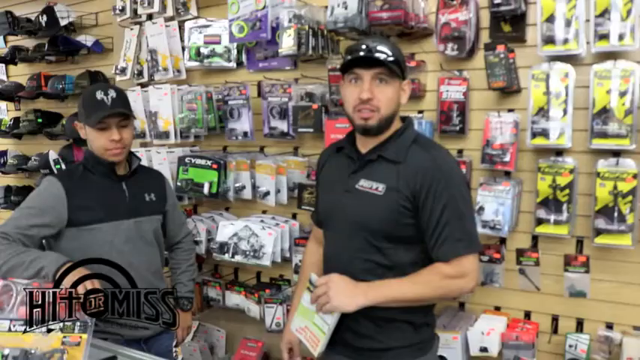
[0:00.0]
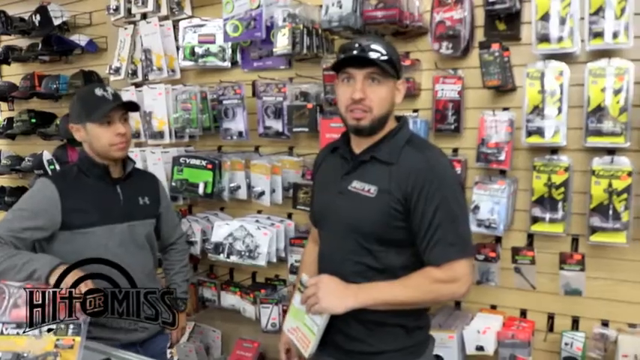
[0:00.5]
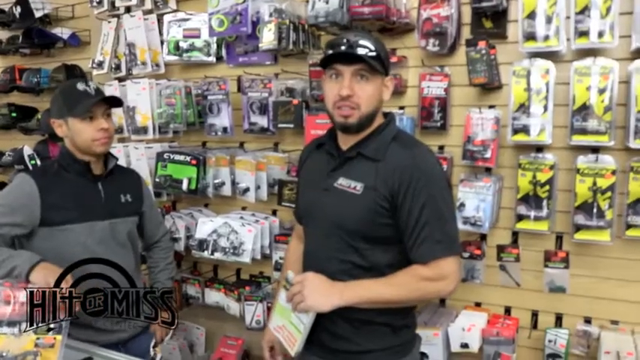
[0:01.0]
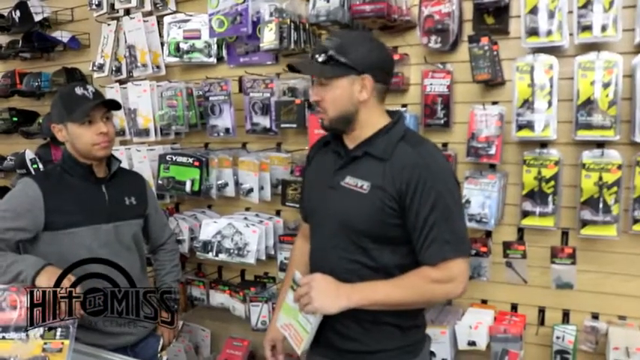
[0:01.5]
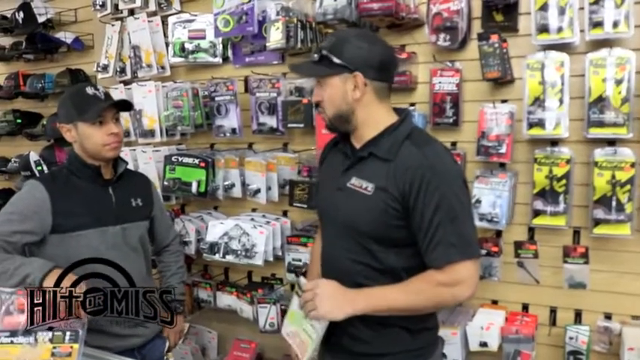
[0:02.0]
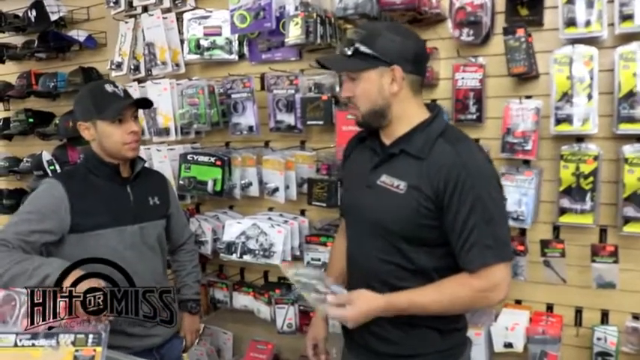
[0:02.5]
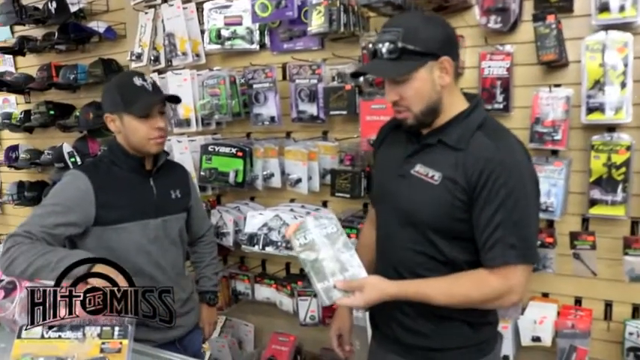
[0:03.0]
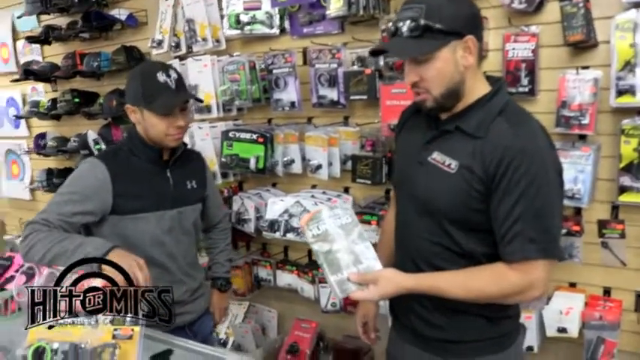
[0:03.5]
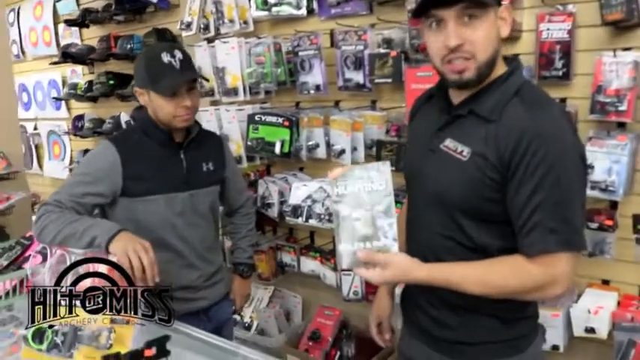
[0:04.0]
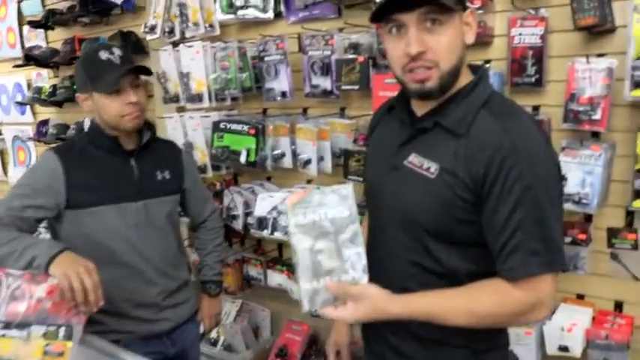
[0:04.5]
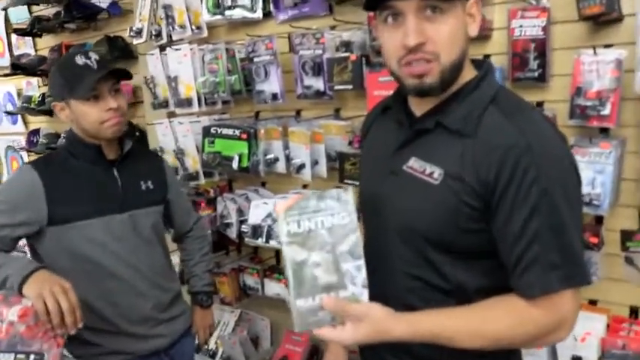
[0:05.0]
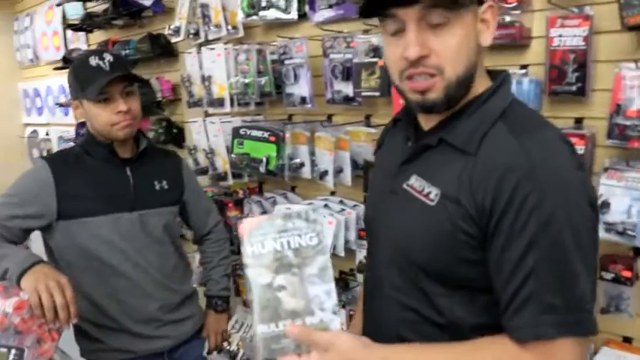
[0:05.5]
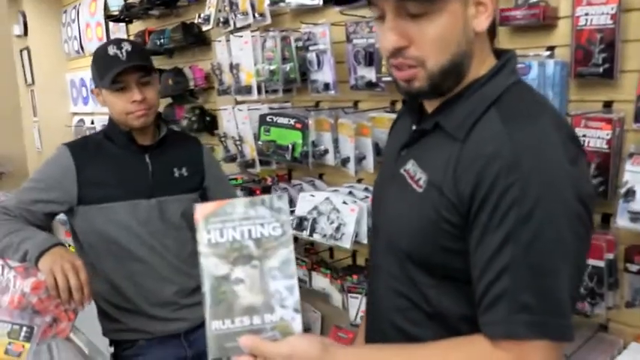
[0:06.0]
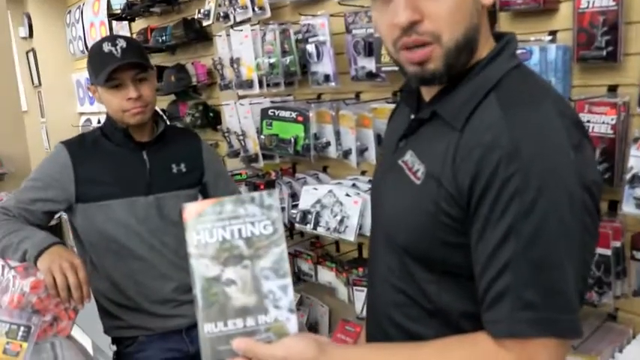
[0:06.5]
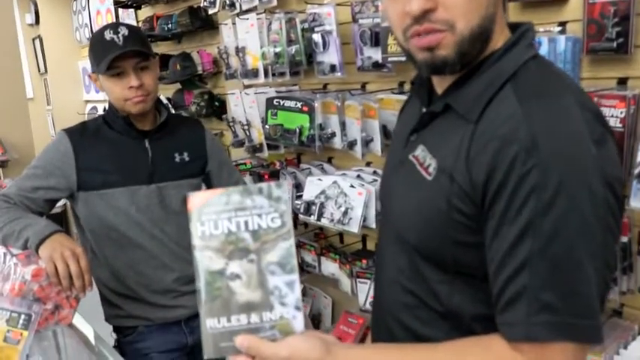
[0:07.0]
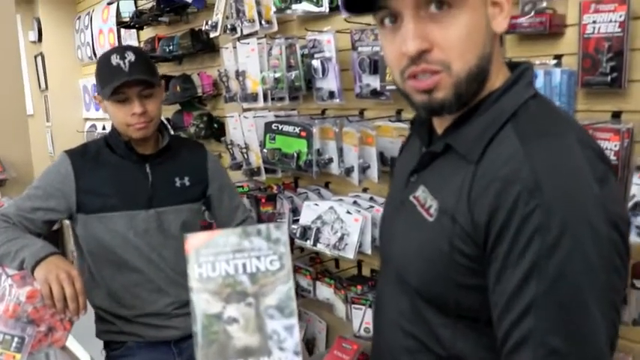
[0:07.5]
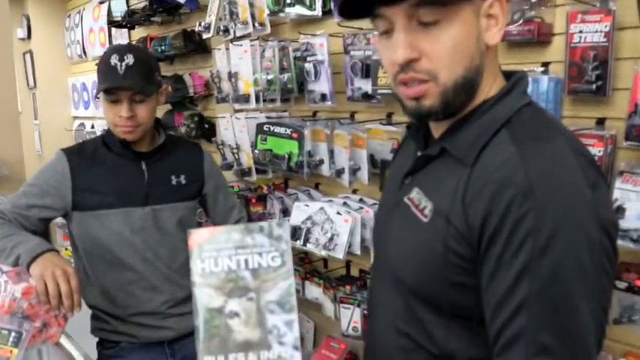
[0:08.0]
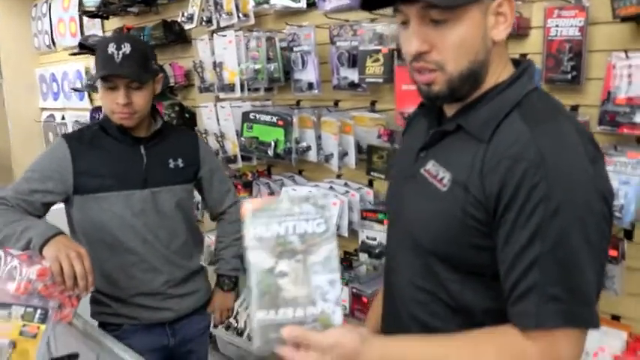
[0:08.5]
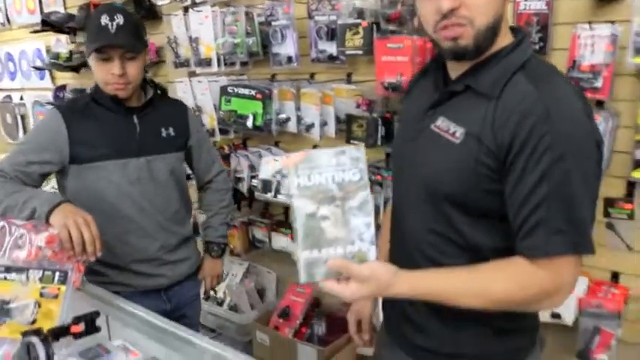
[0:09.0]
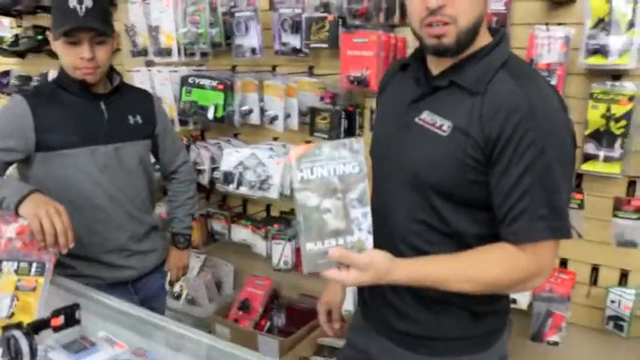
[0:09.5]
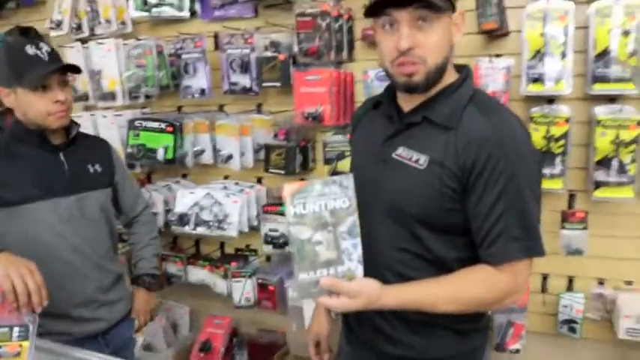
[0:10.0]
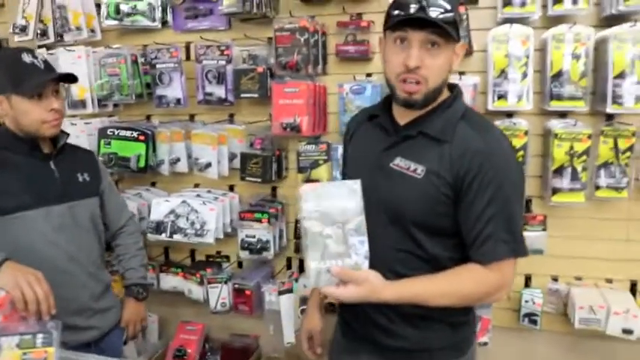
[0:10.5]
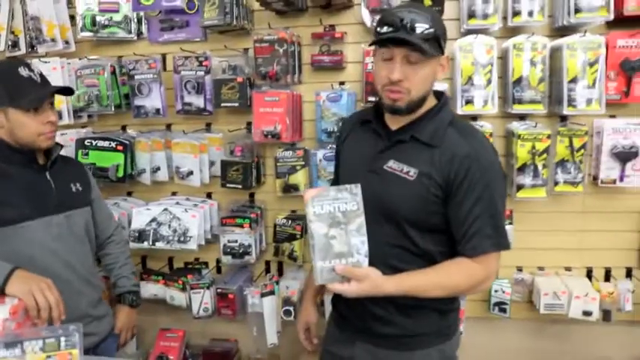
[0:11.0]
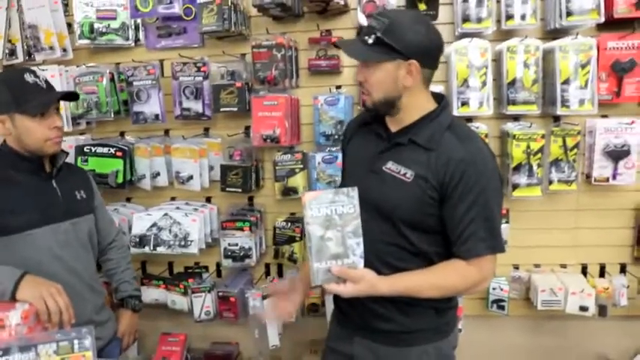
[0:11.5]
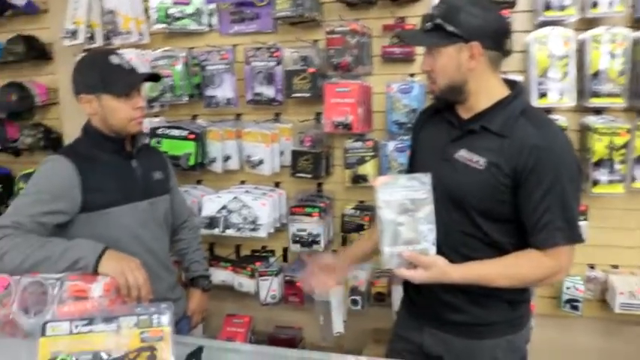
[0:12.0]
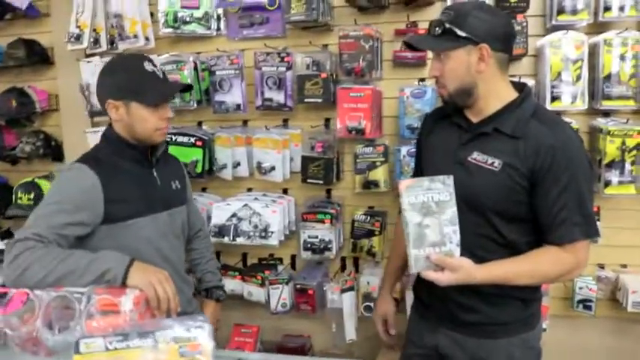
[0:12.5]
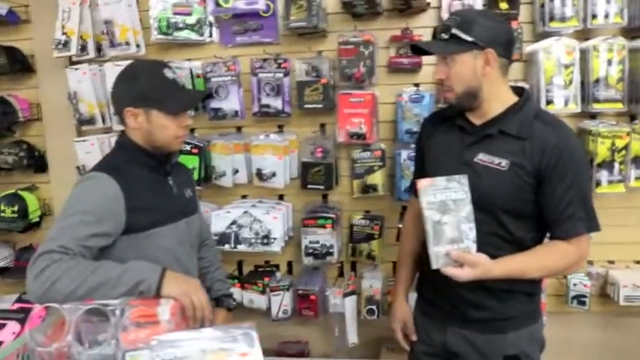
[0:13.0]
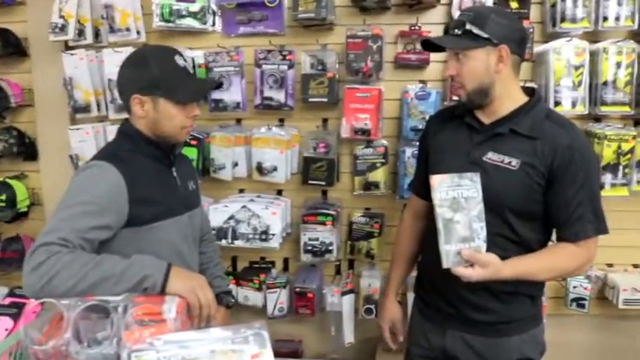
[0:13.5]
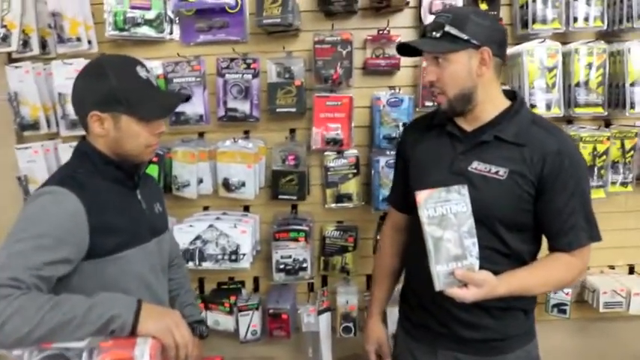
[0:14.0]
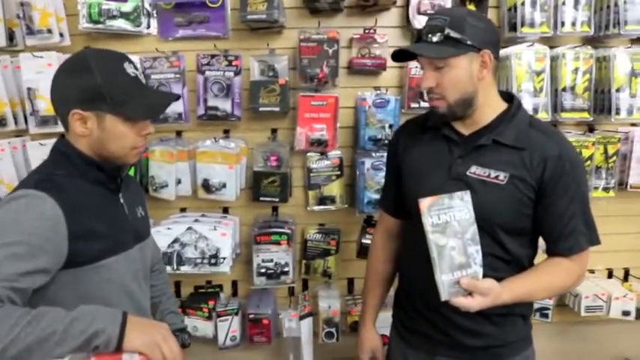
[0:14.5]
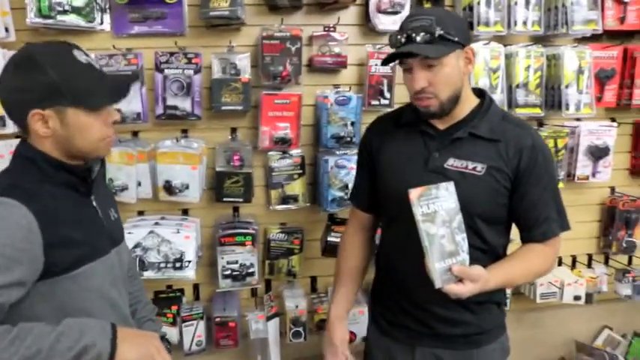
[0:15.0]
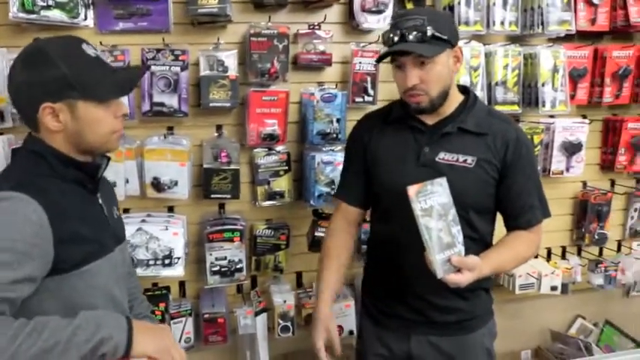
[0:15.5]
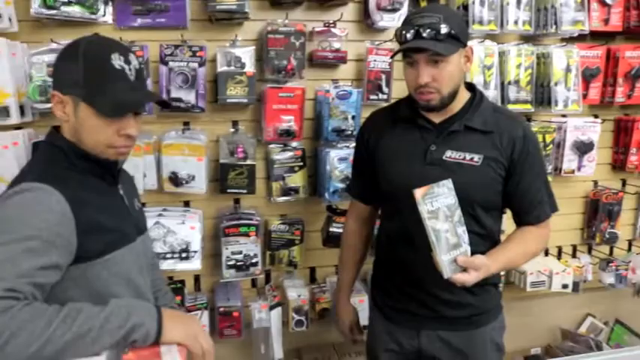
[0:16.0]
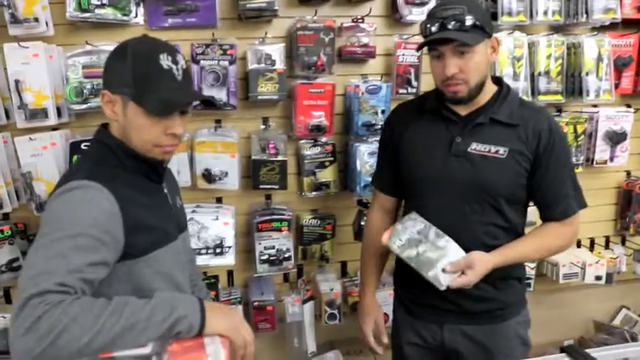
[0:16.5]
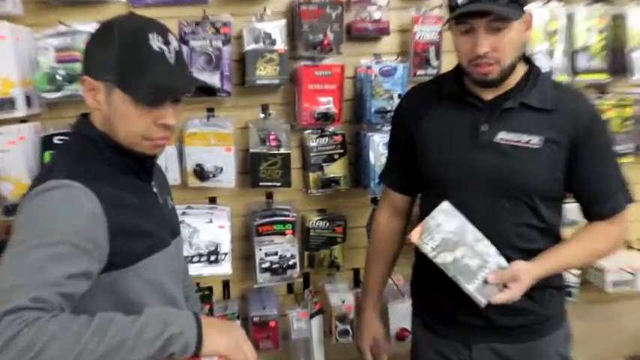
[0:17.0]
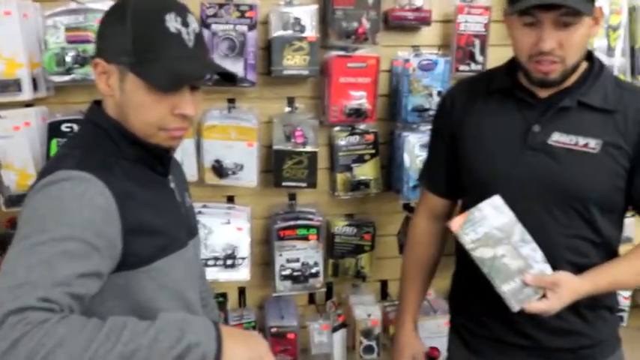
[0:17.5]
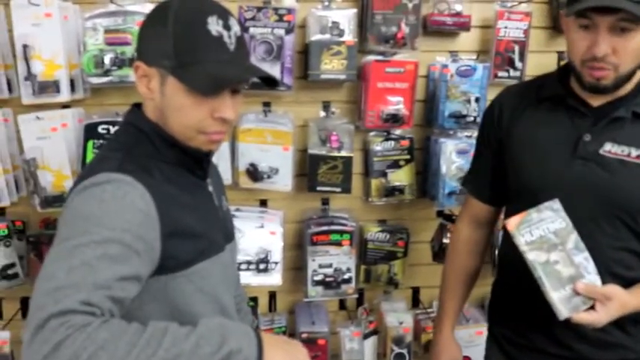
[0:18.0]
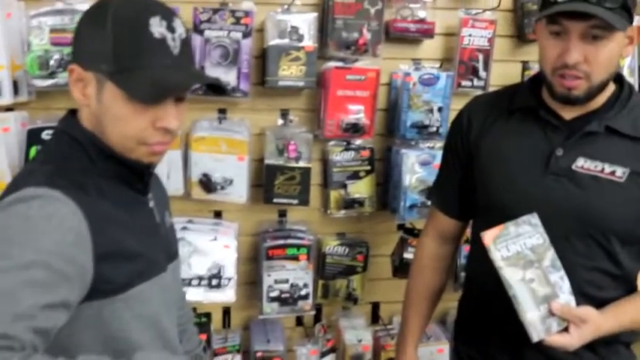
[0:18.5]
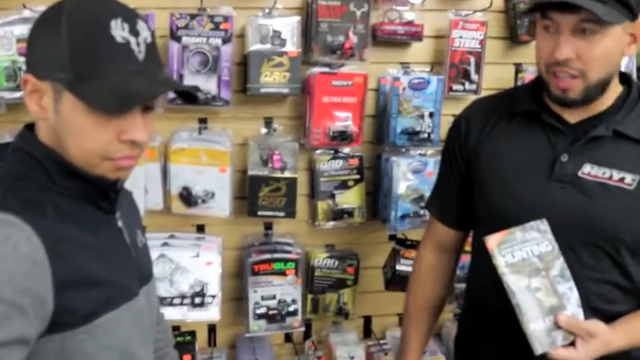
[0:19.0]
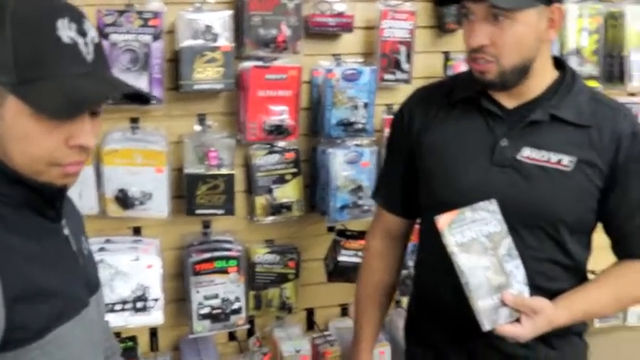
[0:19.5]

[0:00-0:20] Two men appear in what looks like some sort of outdoor activity shop. The words "HIT or MISS" are in the bottom left of the screen. Both men wear black baseball hats. The man on the right wears a black polo top, has sunglasses on top of the brim of his hat, and has black facial hair. The man on the left is slightly shorter, has no facial hair, and wears what looks like an Under Armour fleece top. The two men seem to be talking to each other. The man on the right holds up a package in his left arm, showing it to the camera; it says "HUNTING" on it. The camera kind of zooms in, but there is a lot of light on the package, so it cannot be seen clearly. He talks to the camera and to the man on the left. The camera moves around, and the man on the left is looking down.